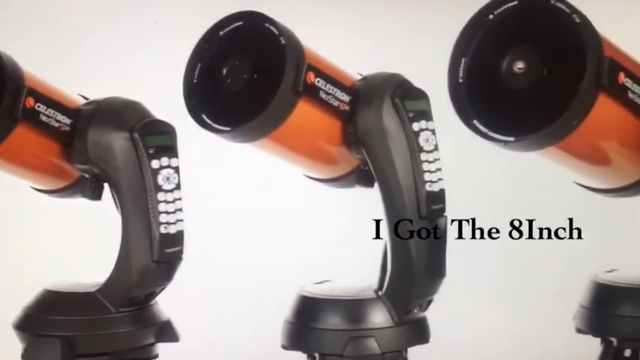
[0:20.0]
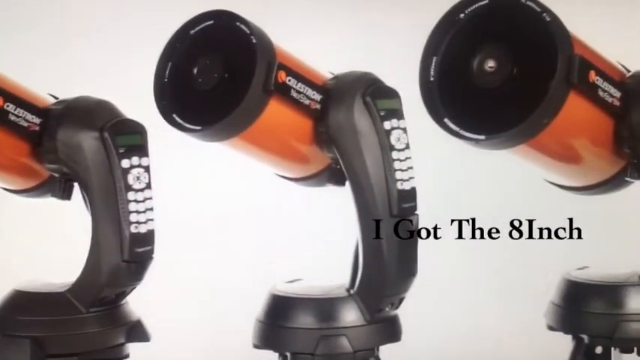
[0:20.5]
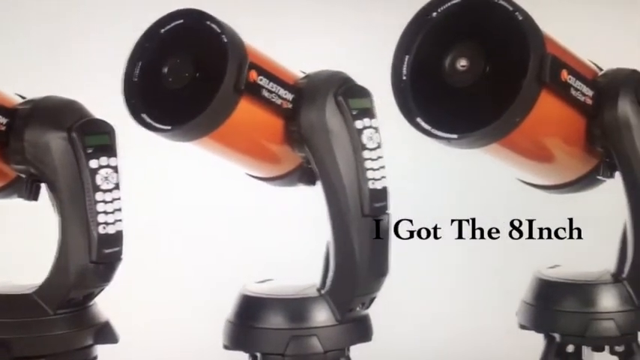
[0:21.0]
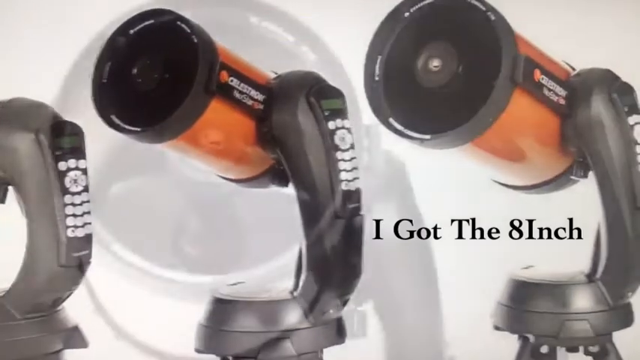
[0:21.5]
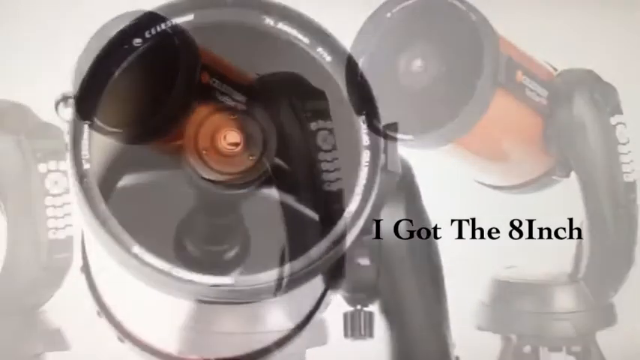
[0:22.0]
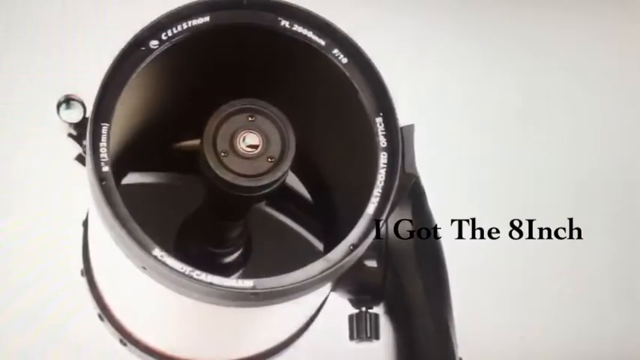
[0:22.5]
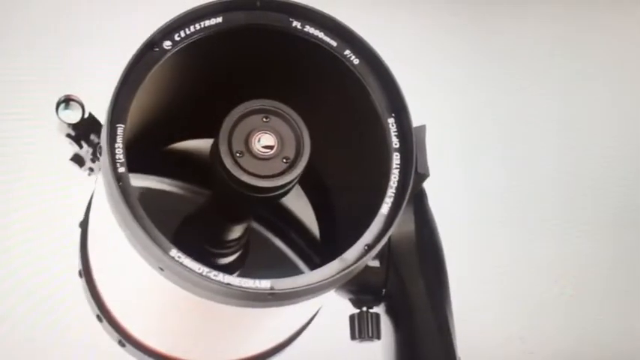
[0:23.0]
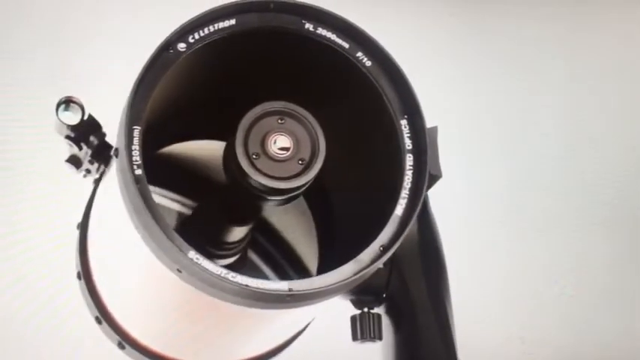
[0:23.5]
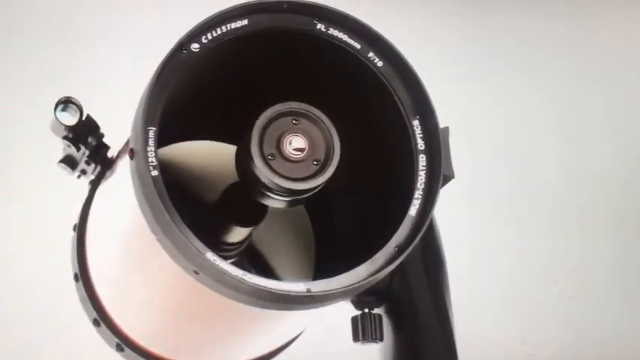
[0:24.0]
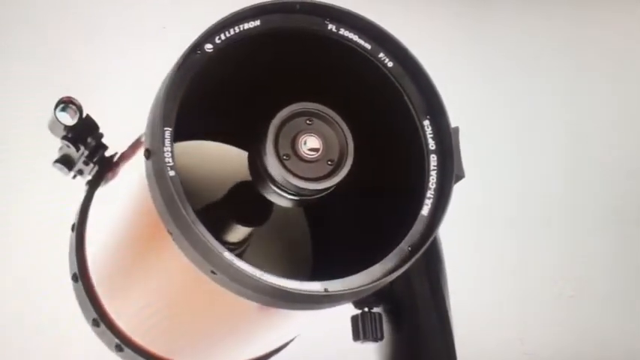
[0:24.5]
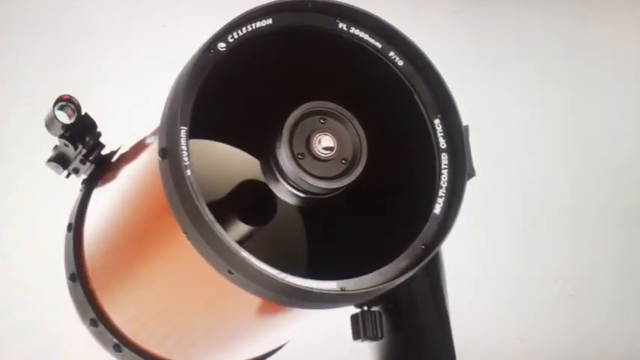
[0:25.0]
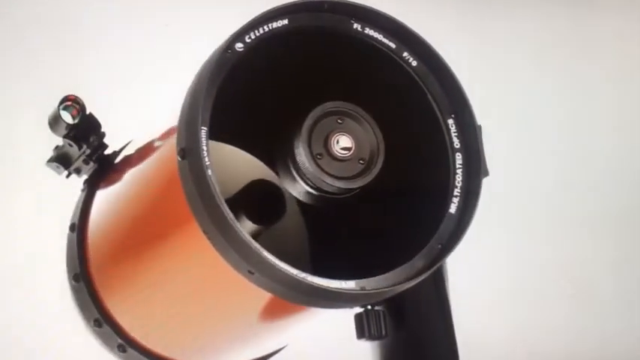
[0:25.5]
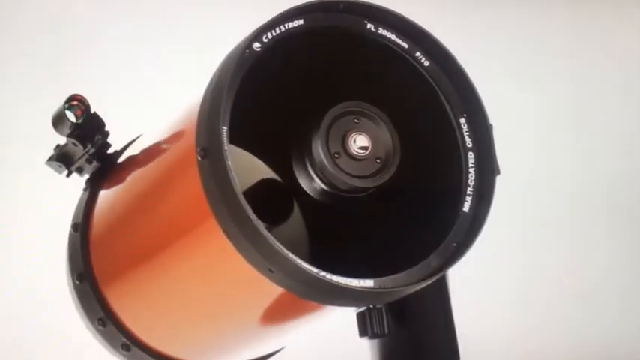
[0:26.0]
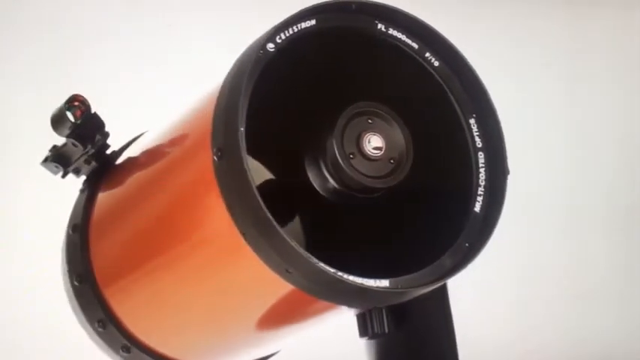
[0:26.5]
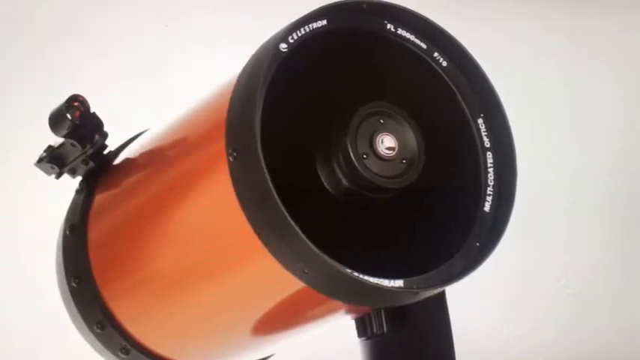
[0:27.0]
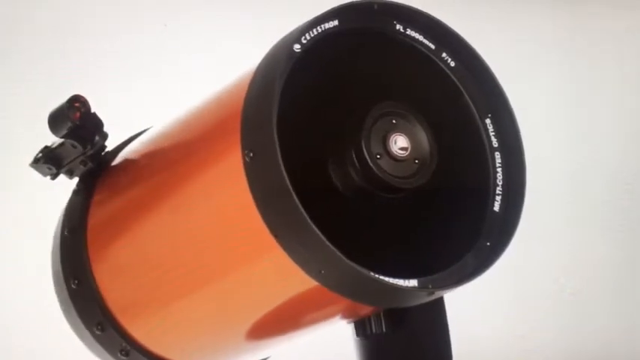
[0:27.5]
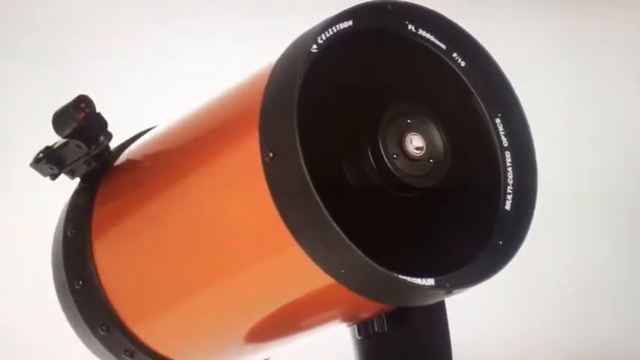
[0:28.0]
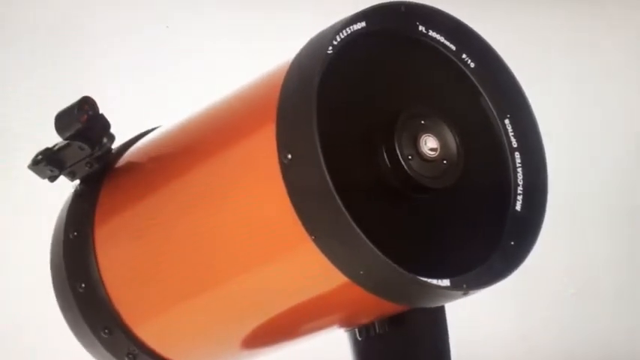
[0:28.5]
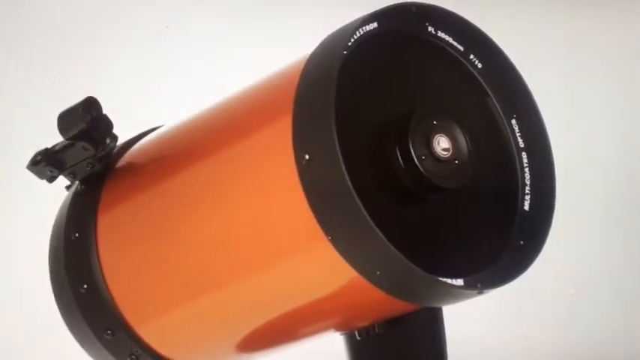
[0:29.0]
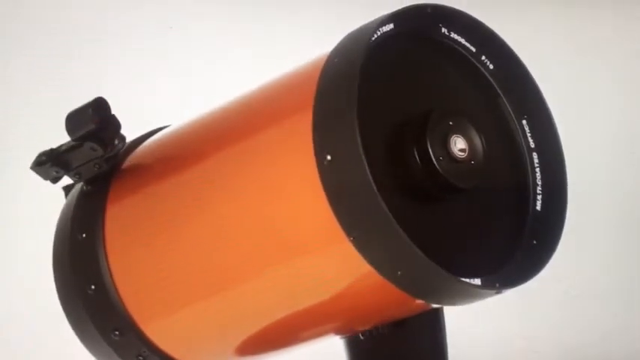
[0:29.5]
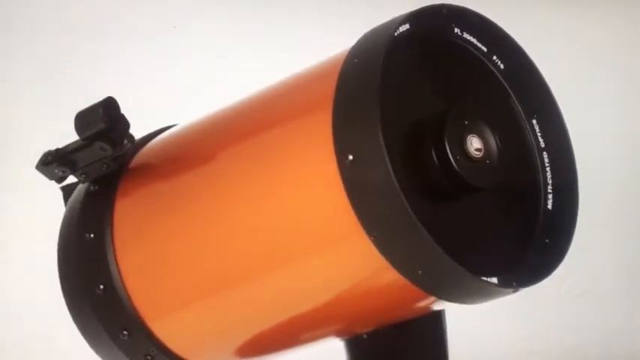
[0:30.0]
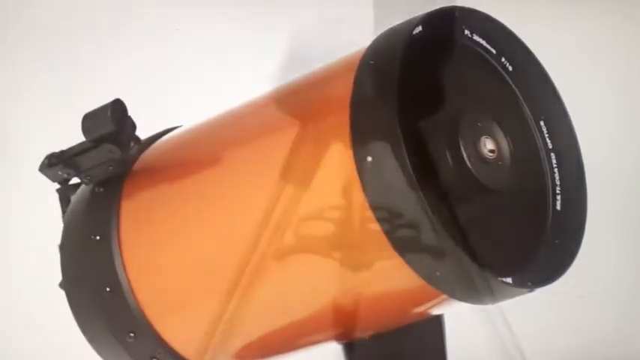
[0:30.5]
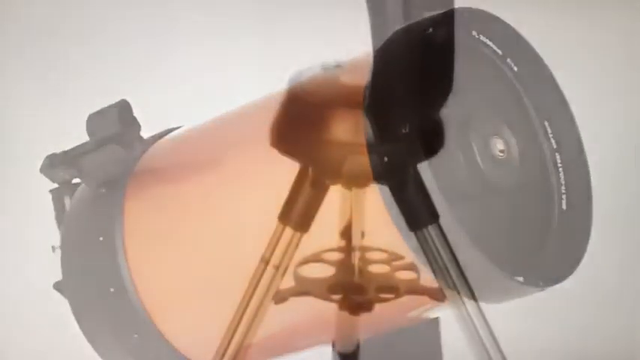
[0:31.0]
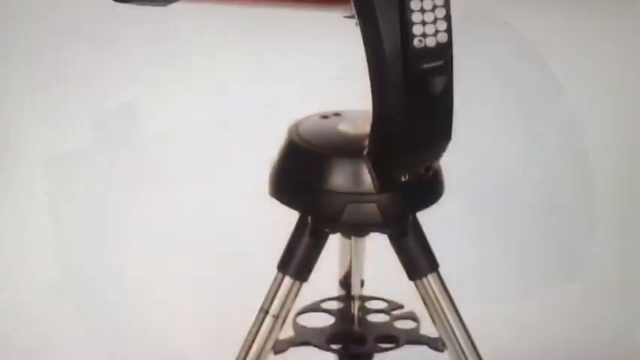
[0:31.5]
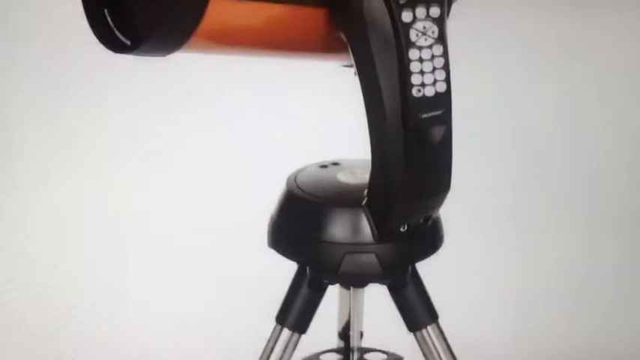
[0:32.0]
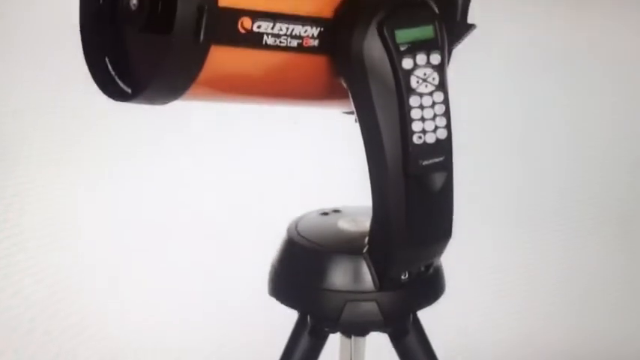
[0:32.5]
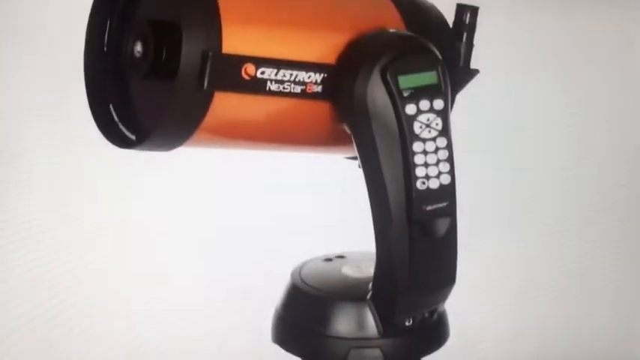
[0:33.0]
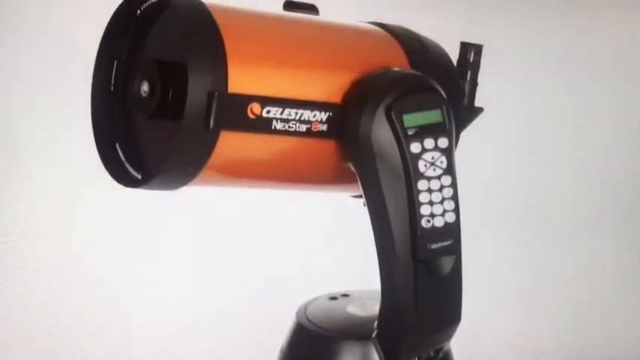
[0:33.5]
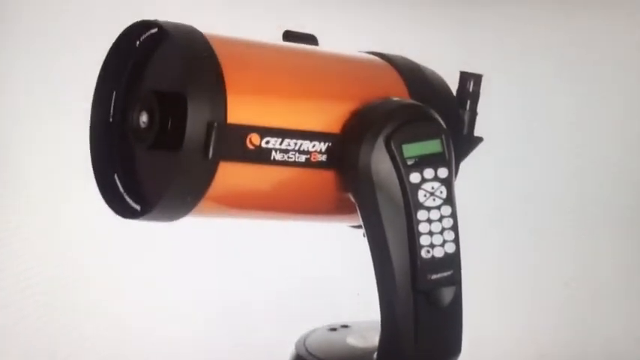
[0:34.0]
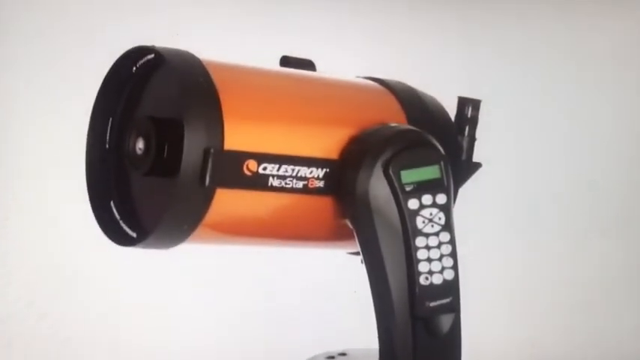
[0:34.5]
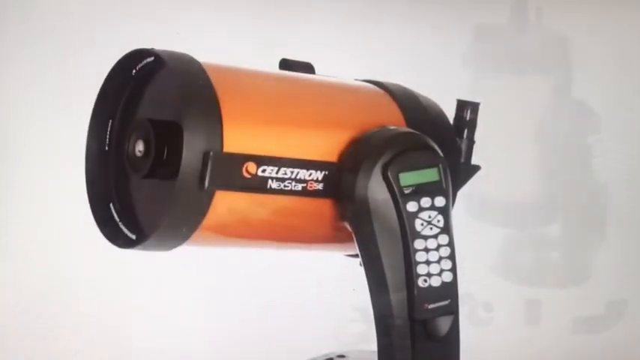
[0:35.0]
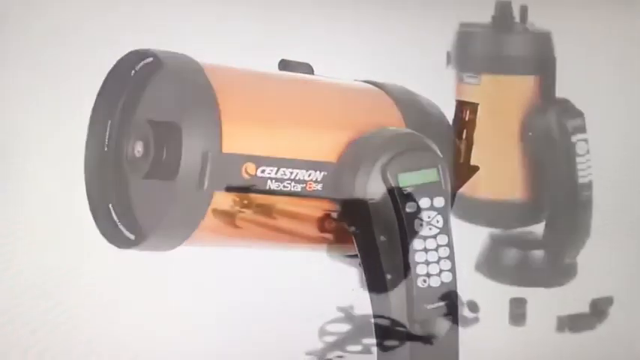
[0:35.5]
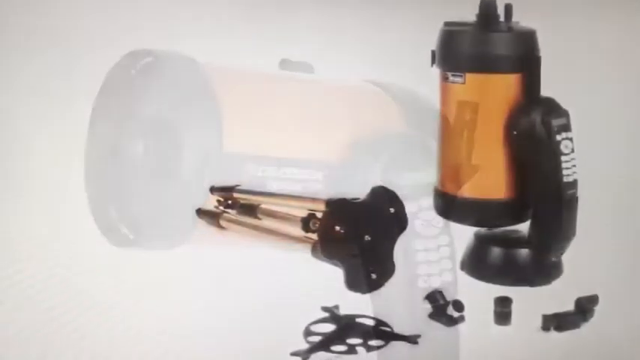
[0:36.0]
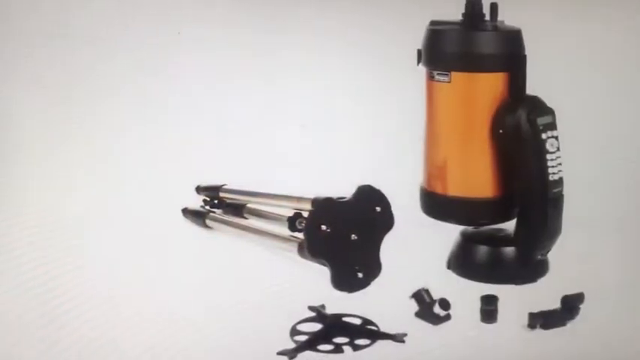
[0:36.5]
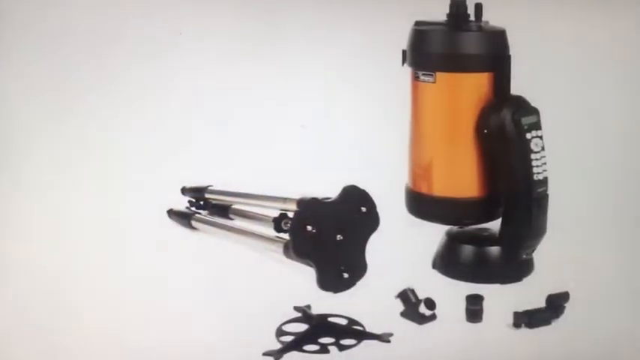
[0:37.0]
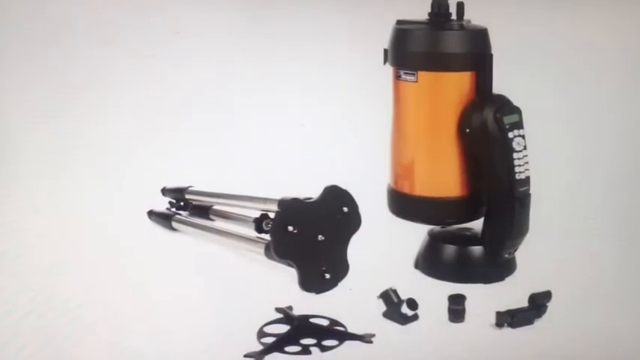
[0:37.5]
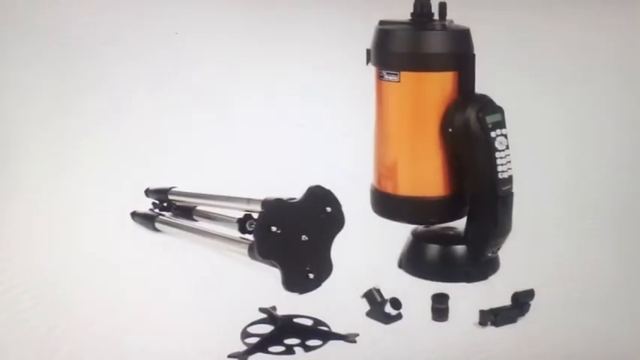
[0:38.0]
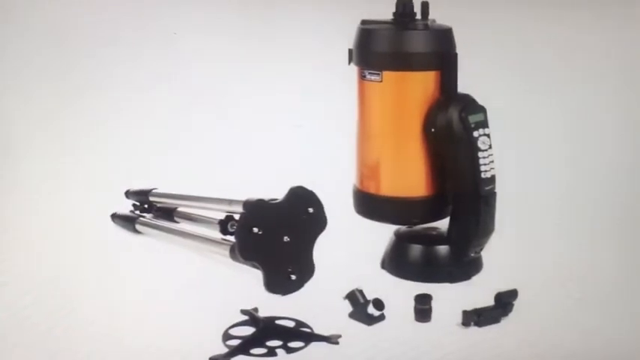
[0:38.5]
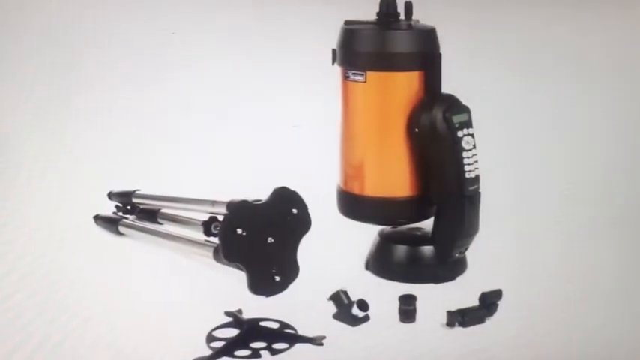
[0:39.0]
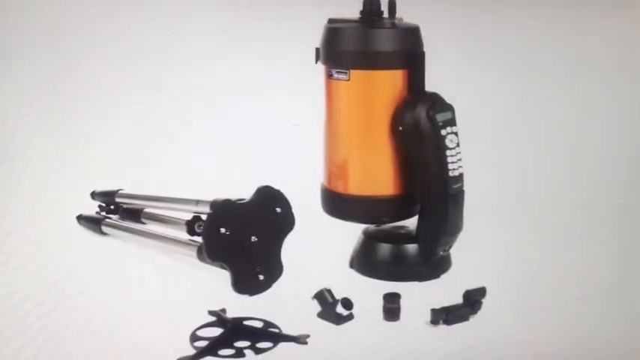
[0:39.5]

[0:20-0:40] About three telescopes are visible, all the same orange and black color, with a logo that says "Celestron Next Star". A very long section of the telescope has white buttons on it. The white background is very overexposed, and bolded black text on the screen says "I got the eight inch". The camera moves to the right, then the video transitions to the front of the telescope, and the camera kind of moves to get the side of the telescope, which has a very glossy appearance. It slowly transitions to another view that goes from the bottom of the telescope up toward the top. Then the telescope is laying on a flat surface with a tripod sitting next to it, along with some of the black accessories included with it.